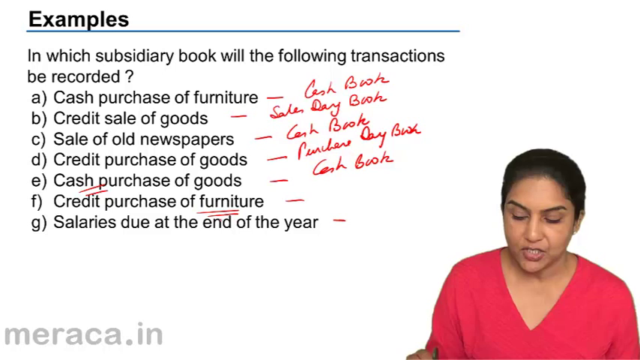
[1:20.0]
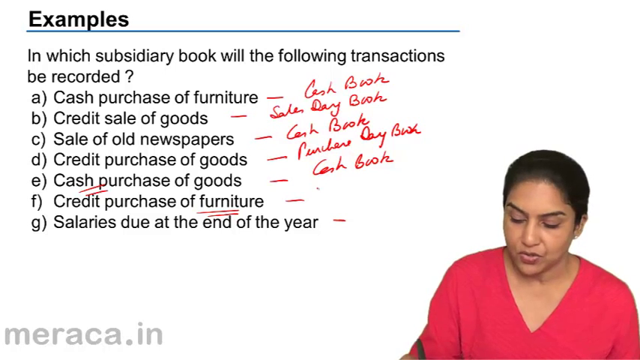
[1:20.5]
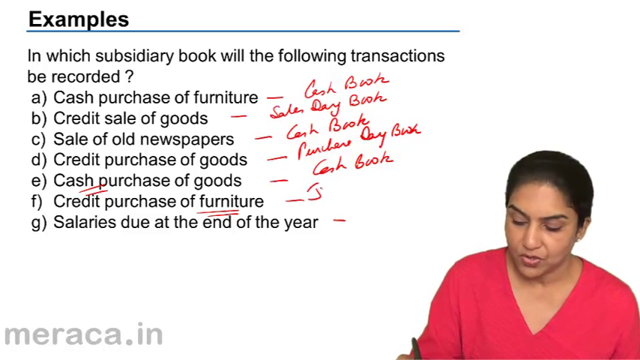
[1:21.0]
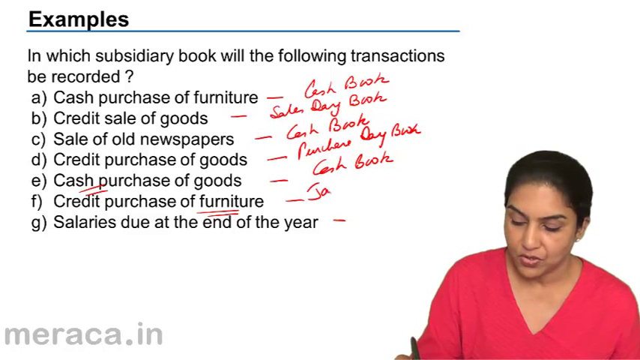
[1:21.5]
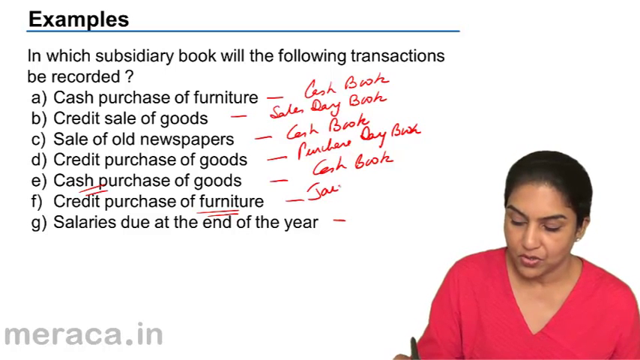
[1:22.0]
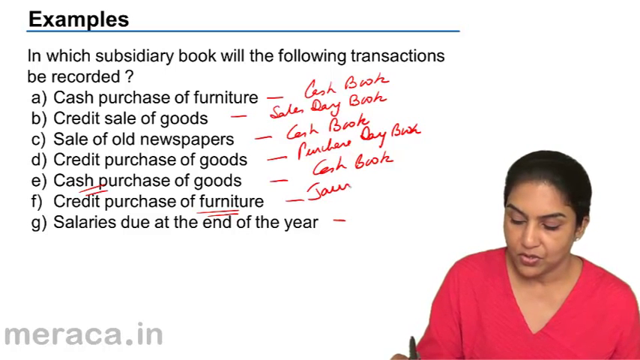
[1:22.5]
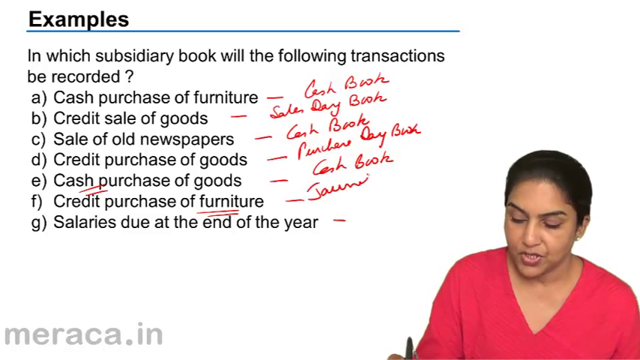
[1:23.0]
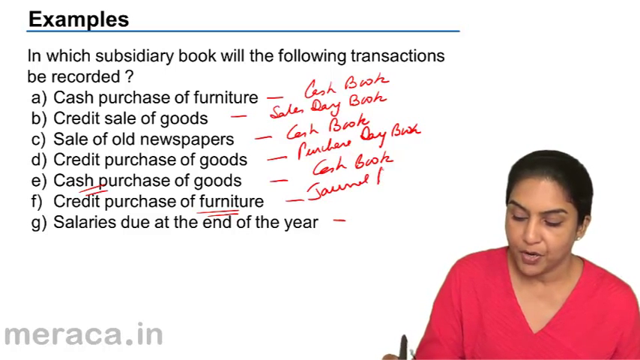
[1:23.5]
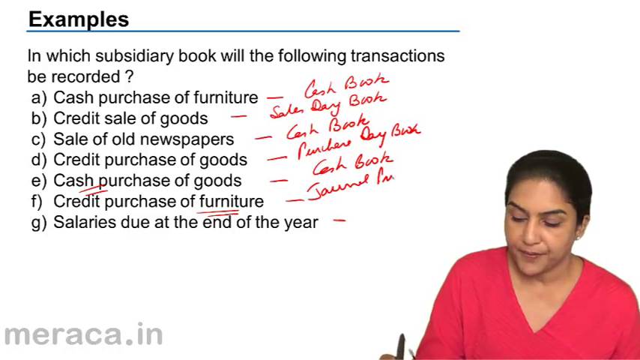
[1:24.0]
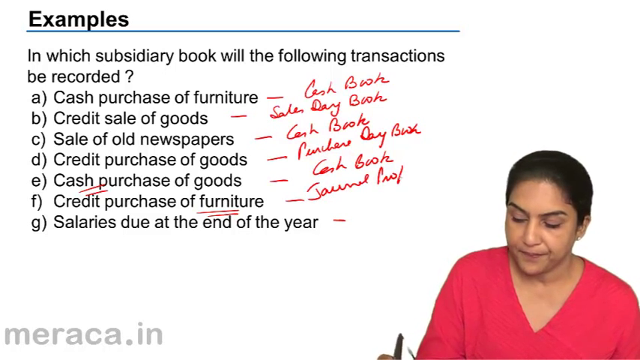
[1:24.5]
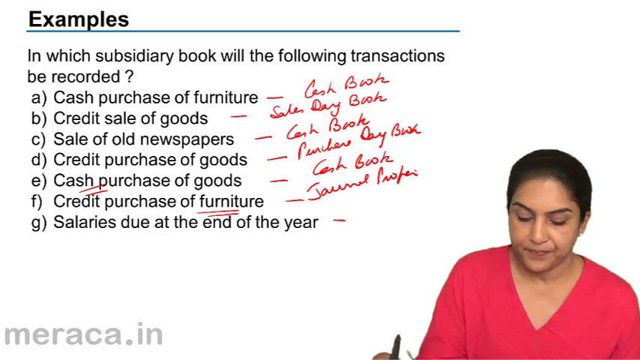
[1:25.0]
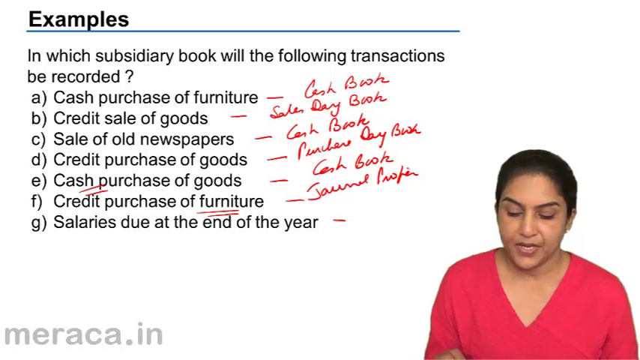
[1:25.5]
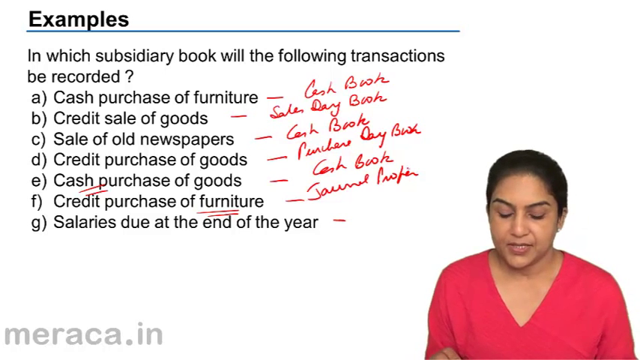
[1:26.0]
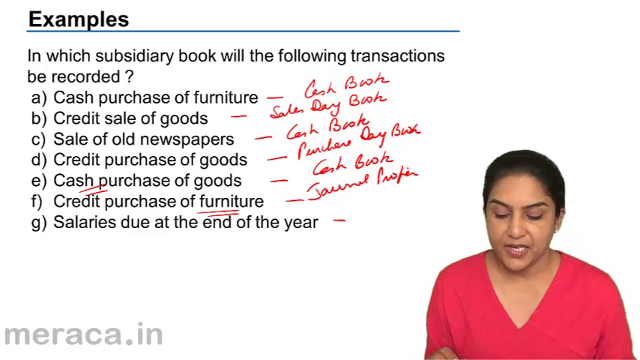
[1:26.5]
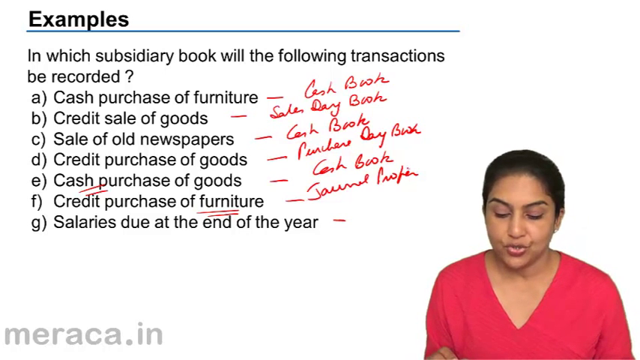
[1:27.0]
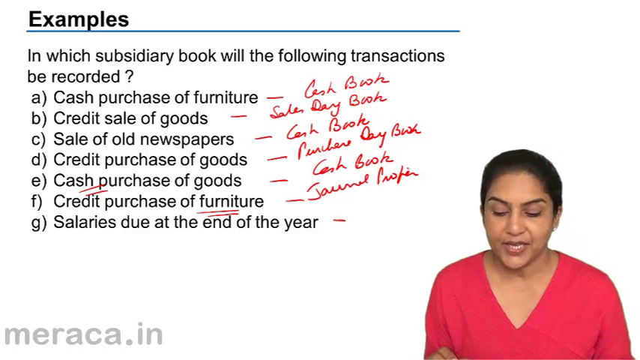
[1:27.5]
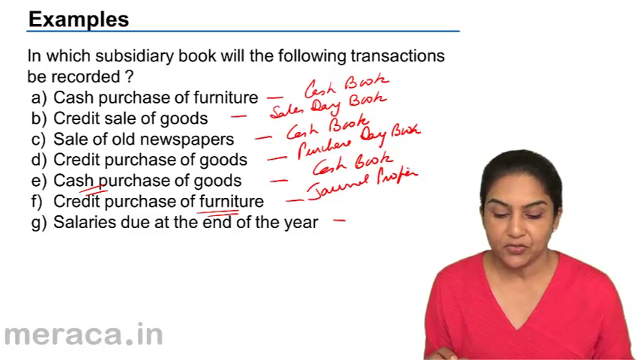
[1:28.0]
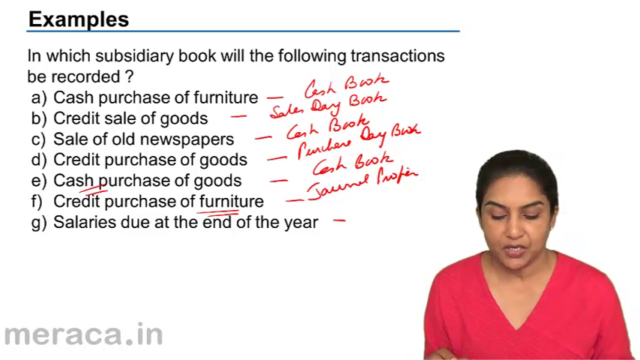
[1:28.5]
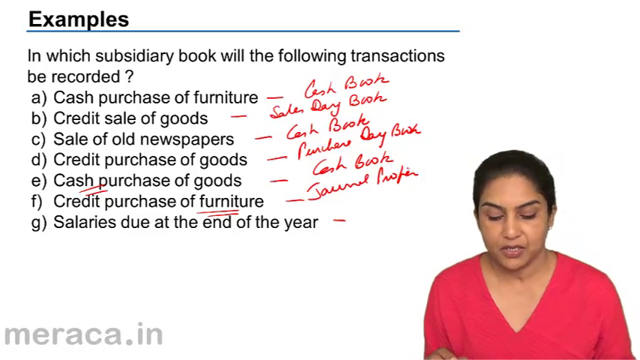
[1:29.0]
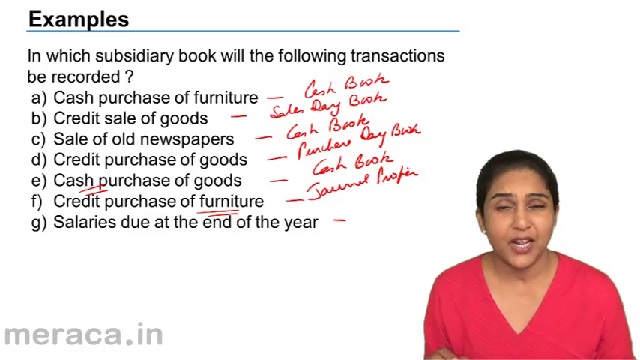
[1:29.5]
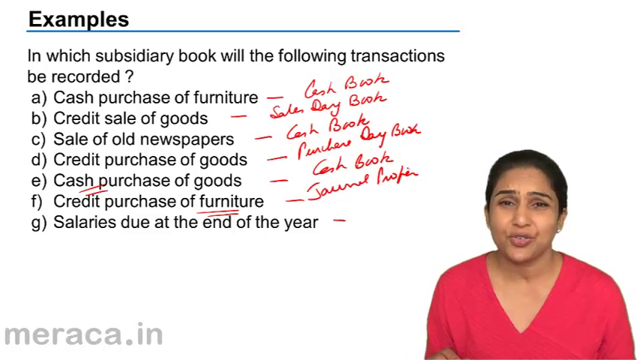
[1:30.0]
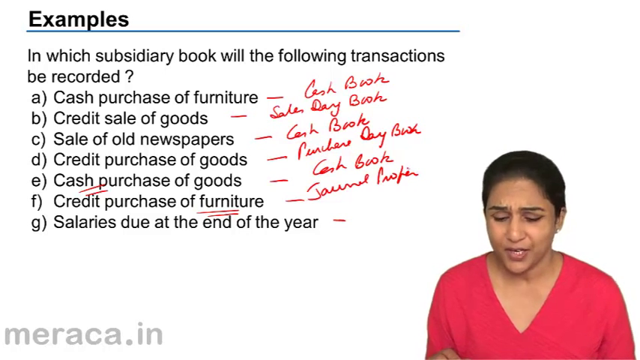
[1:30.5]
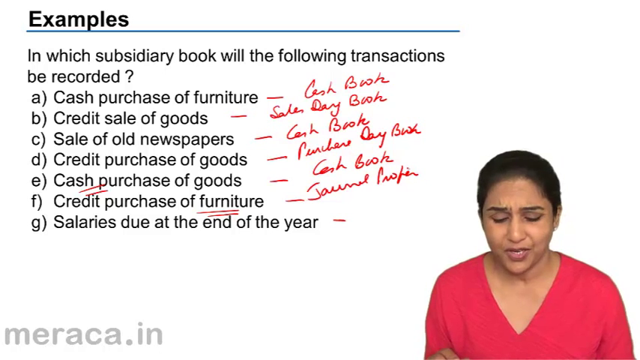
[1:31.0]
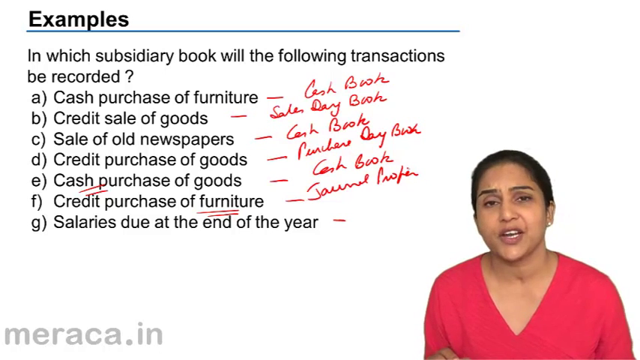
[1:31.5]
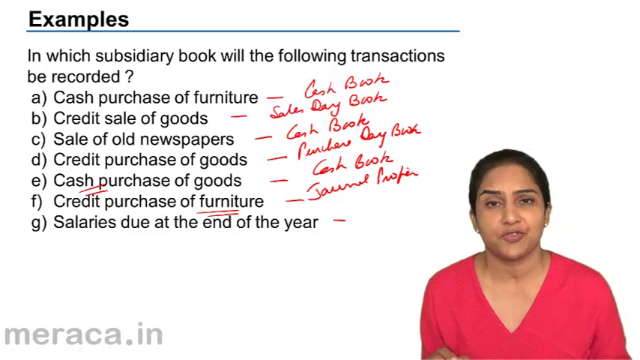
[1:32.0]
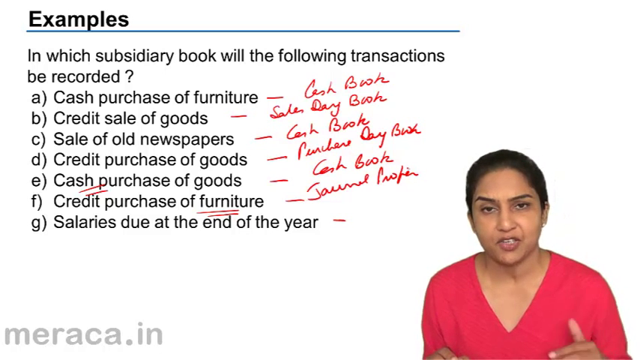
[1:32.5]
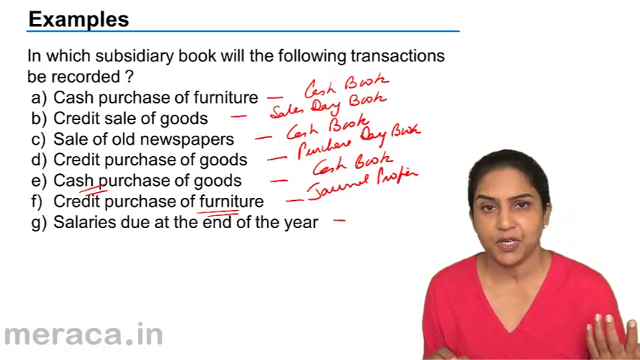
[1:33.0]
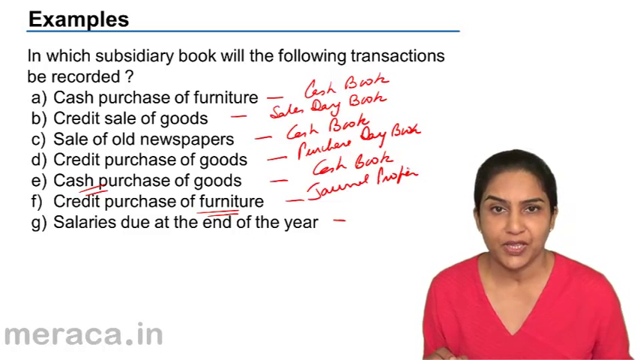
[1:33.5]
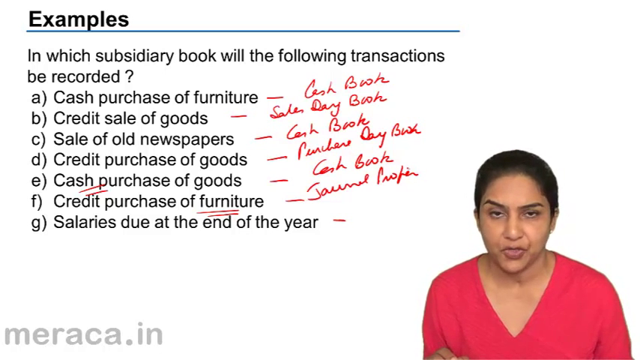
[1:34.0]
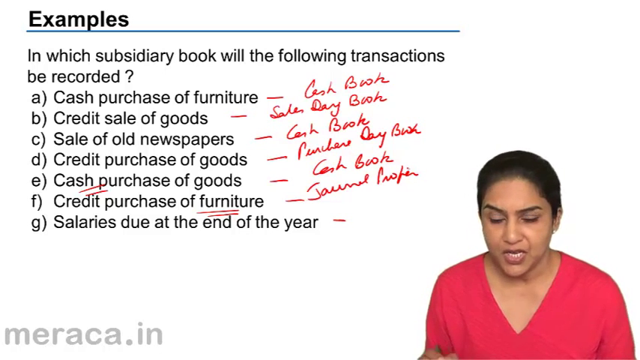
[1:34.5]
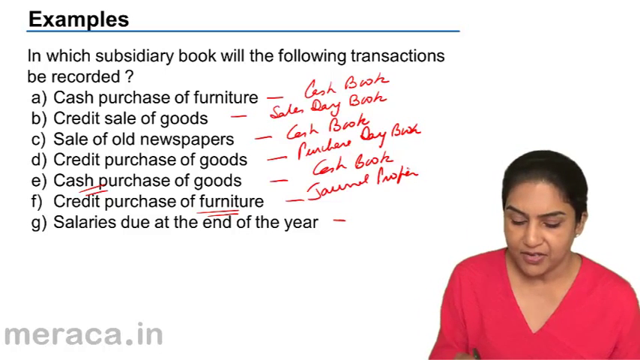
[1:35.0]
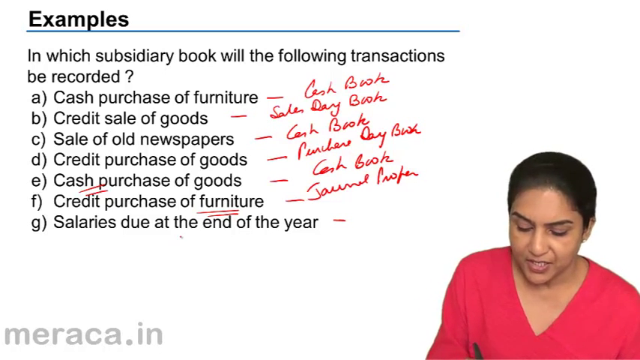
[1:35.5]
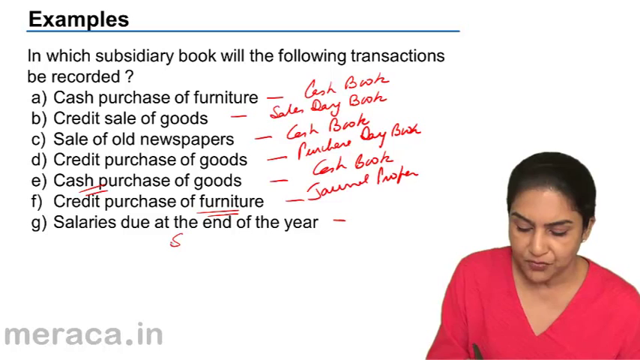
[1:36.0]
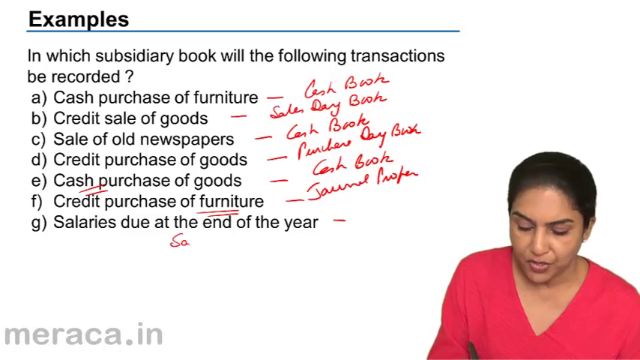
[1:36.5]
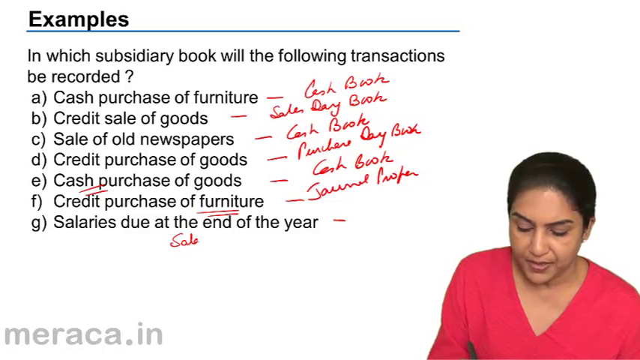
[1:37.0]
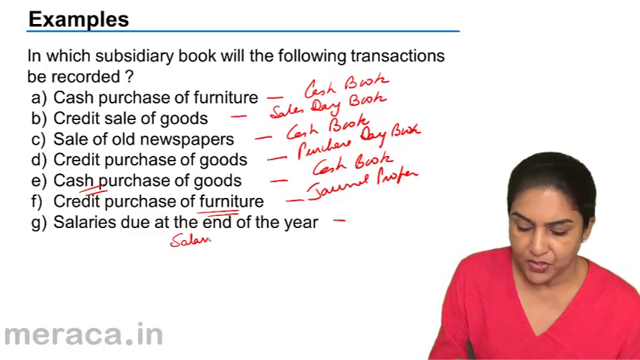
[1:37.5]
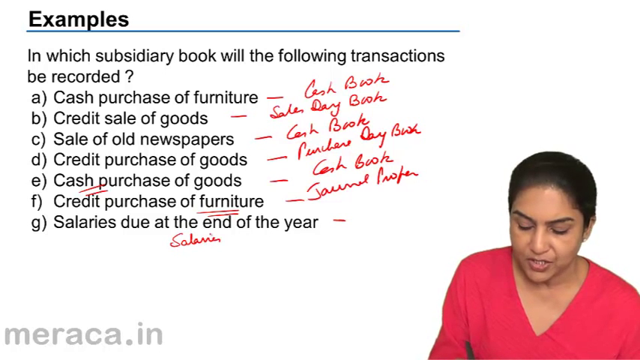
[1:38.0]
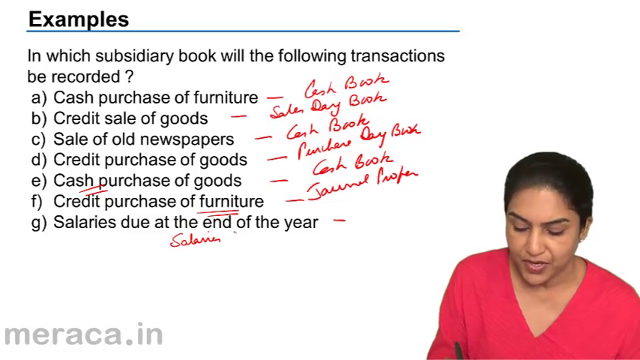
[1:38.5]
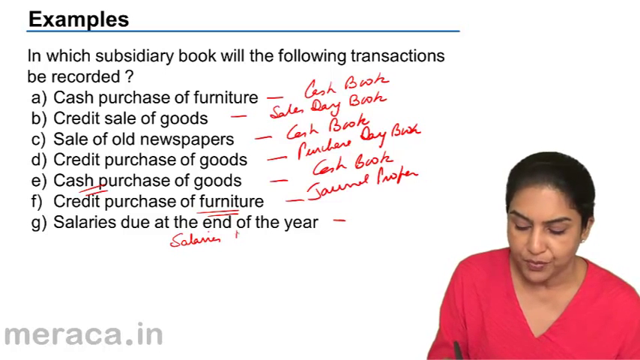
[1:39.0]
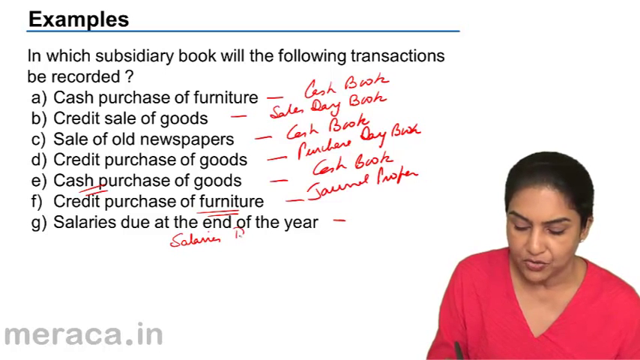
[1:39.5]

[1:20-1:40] She writes something after option F that looks like "journal profit" or something similar, though it is hard to make out. She then turns to option G, looks up a few times and makes a hand gesture with her left hand. Next she writes something under option G that looks like "salaries"; unlike the other options, this is written below the row rather than to the right of the text. Her handwriting is in red ink, while the rest of the text is typed in black.